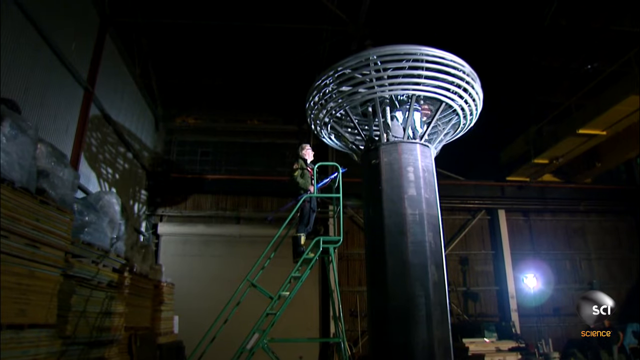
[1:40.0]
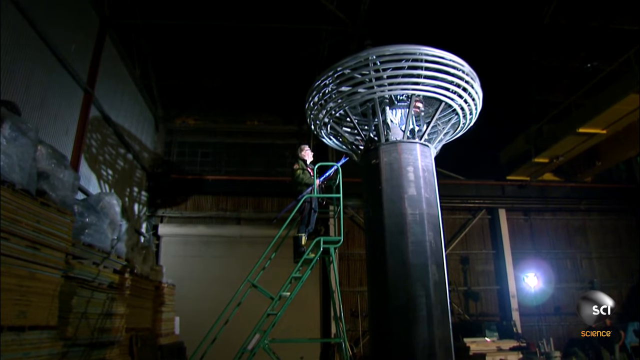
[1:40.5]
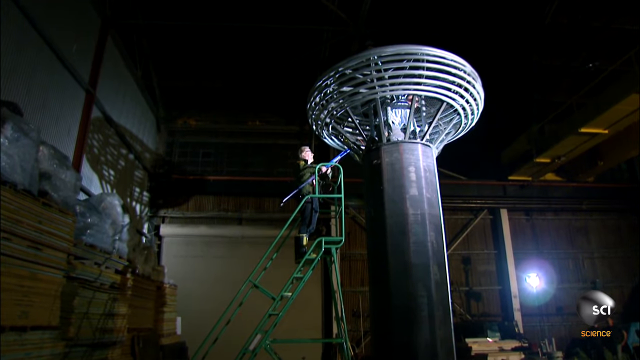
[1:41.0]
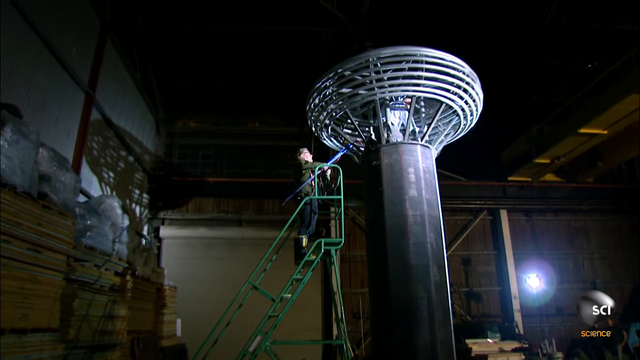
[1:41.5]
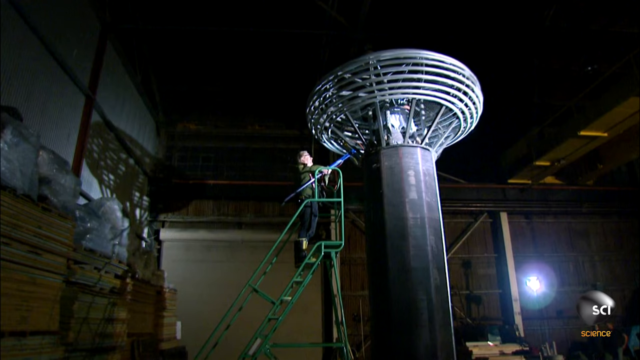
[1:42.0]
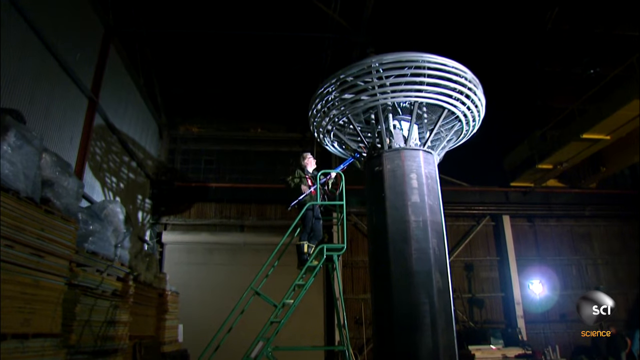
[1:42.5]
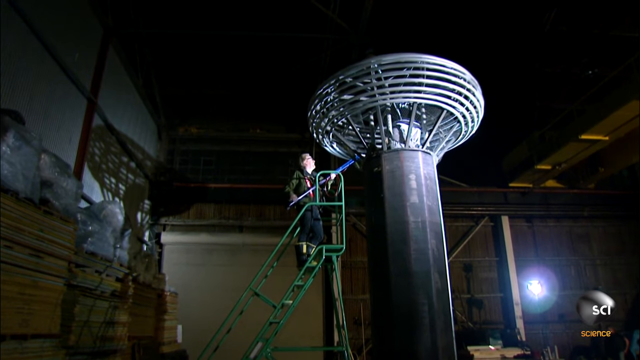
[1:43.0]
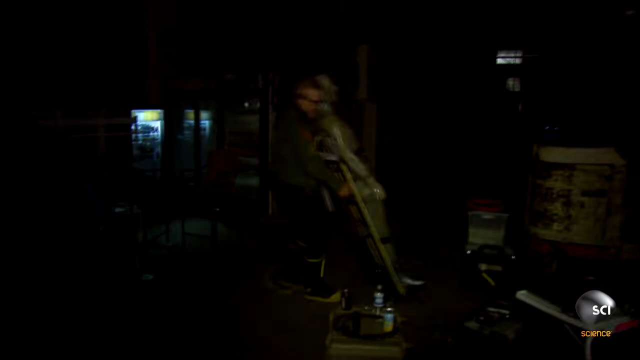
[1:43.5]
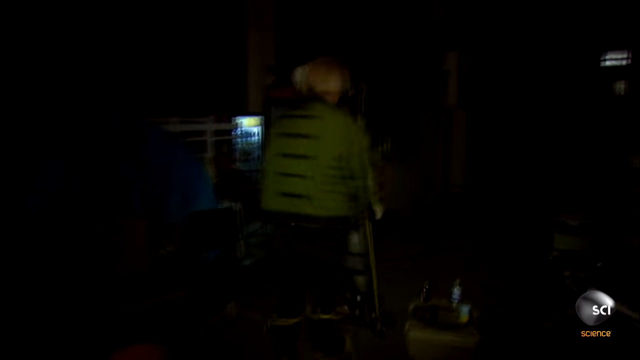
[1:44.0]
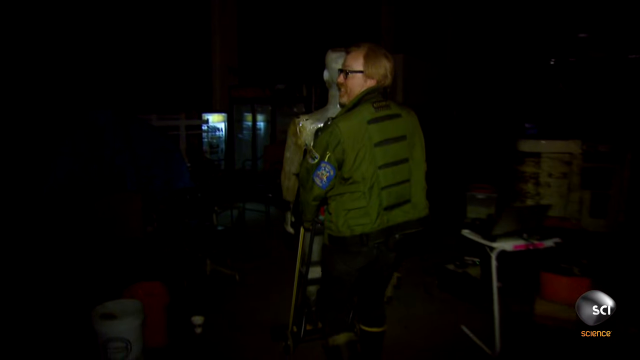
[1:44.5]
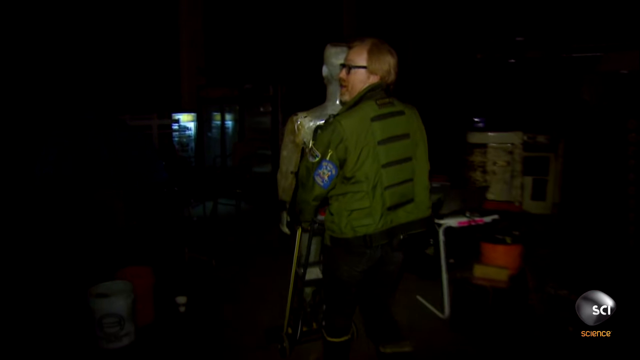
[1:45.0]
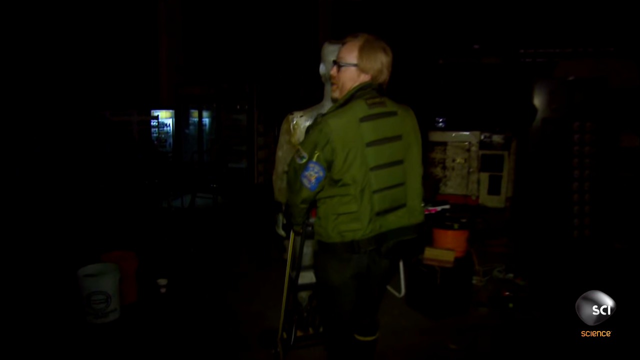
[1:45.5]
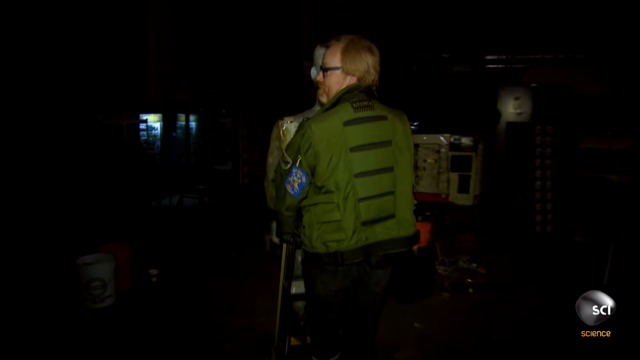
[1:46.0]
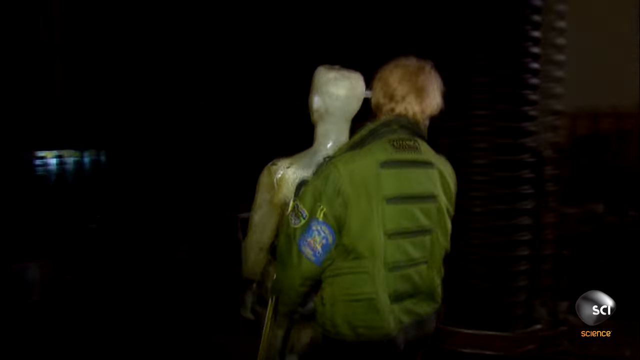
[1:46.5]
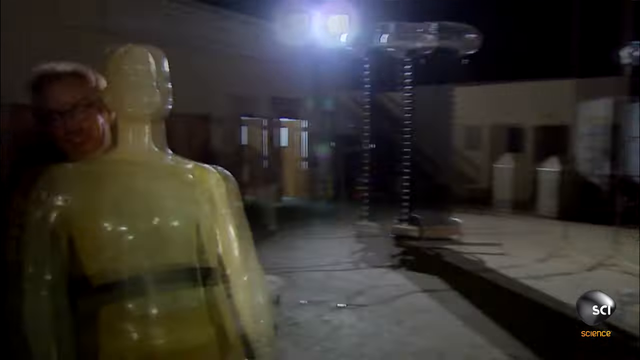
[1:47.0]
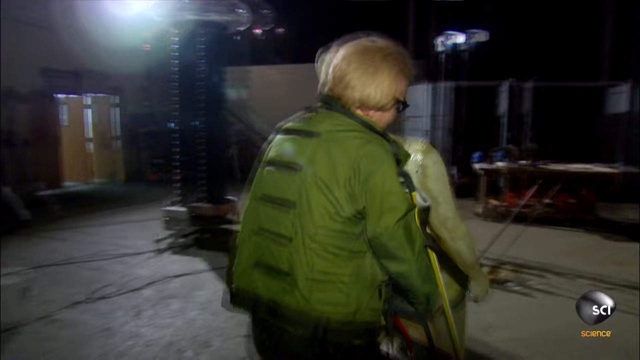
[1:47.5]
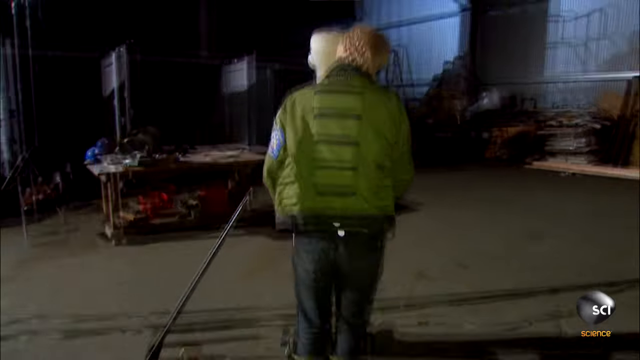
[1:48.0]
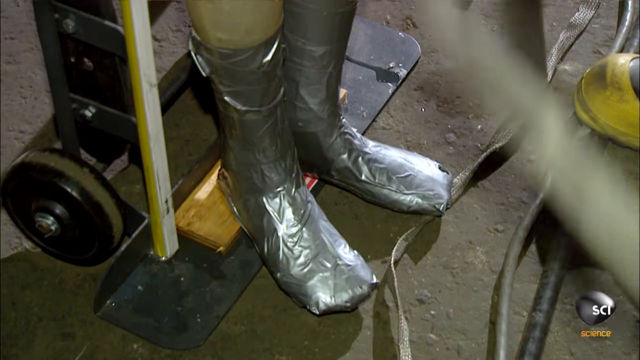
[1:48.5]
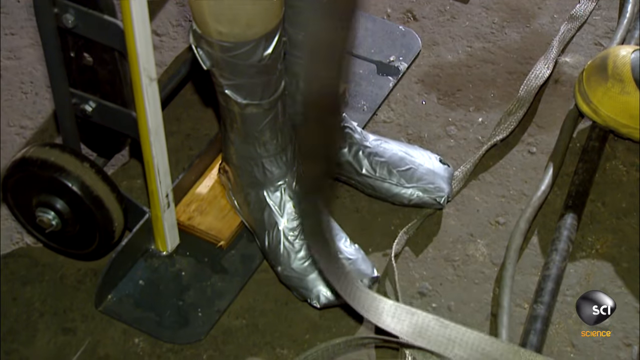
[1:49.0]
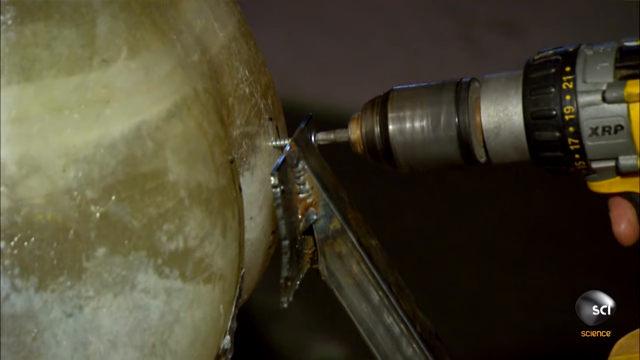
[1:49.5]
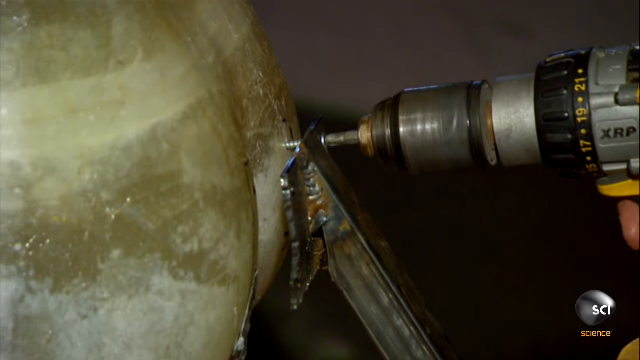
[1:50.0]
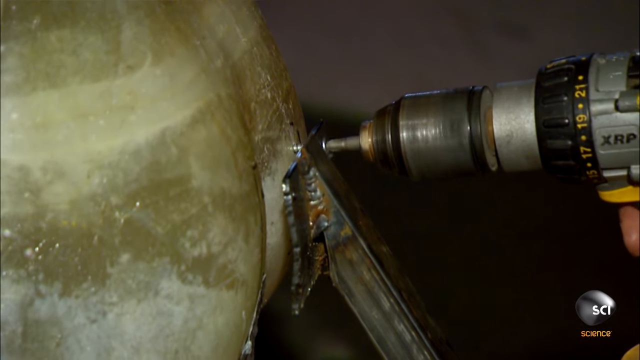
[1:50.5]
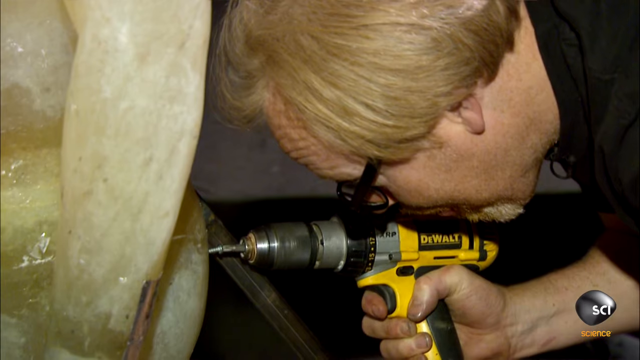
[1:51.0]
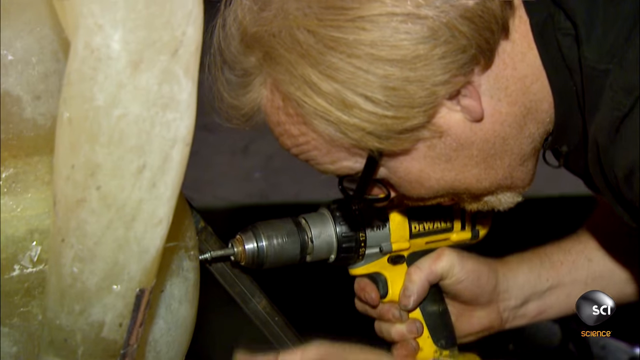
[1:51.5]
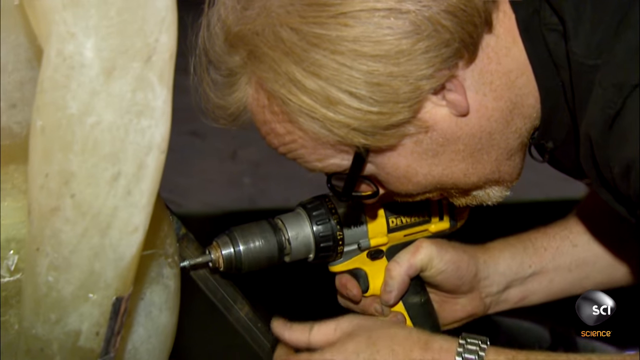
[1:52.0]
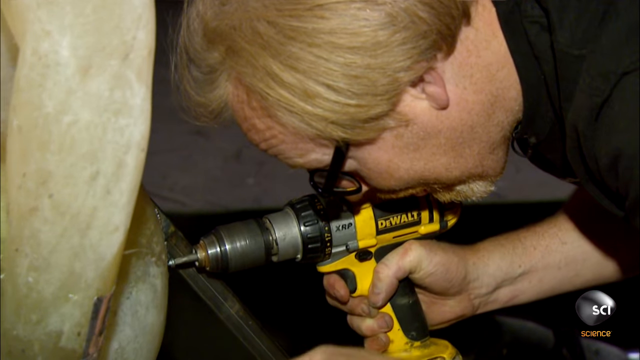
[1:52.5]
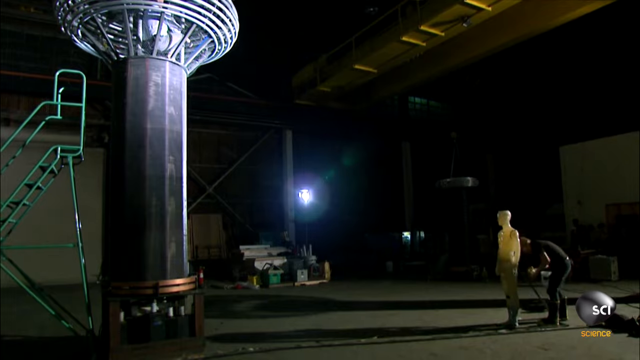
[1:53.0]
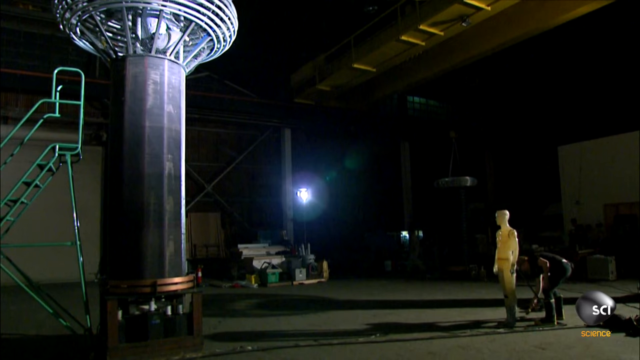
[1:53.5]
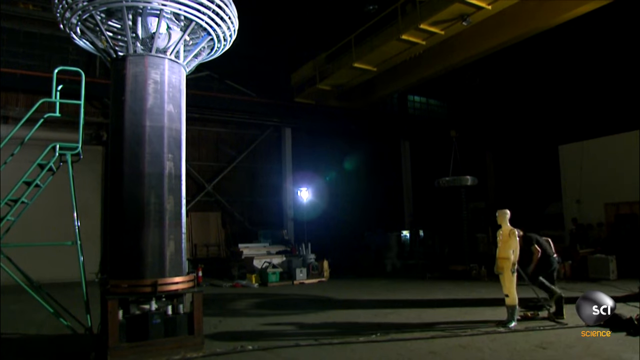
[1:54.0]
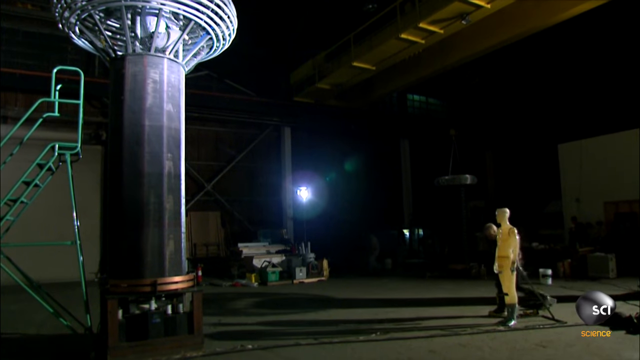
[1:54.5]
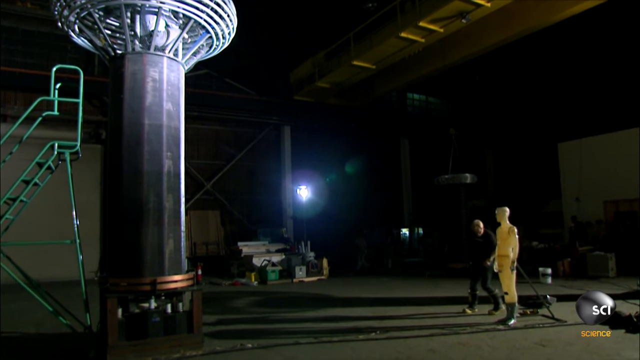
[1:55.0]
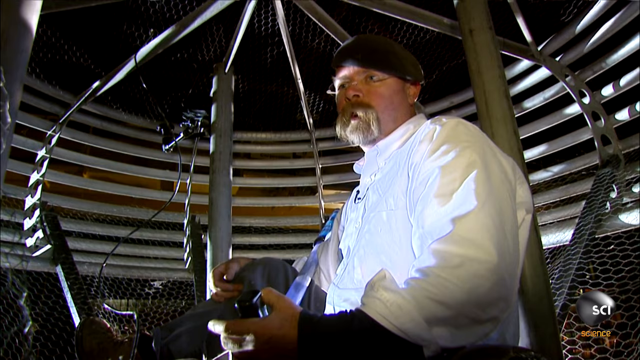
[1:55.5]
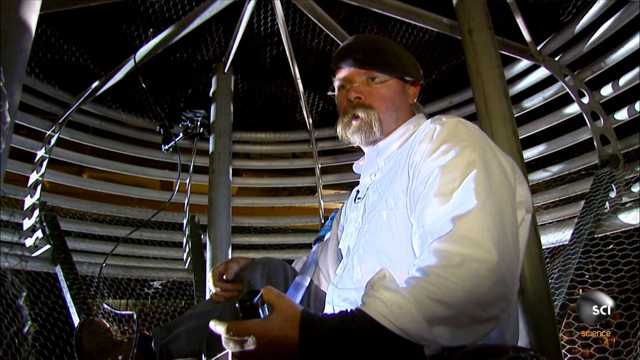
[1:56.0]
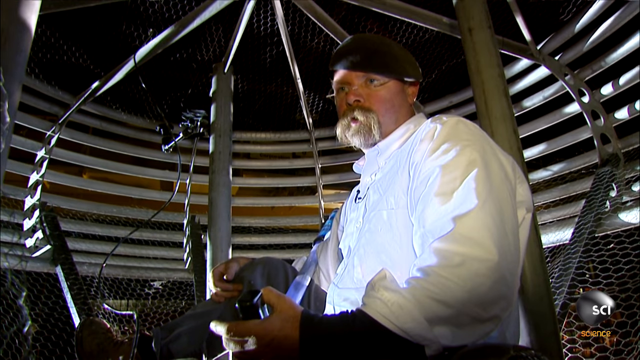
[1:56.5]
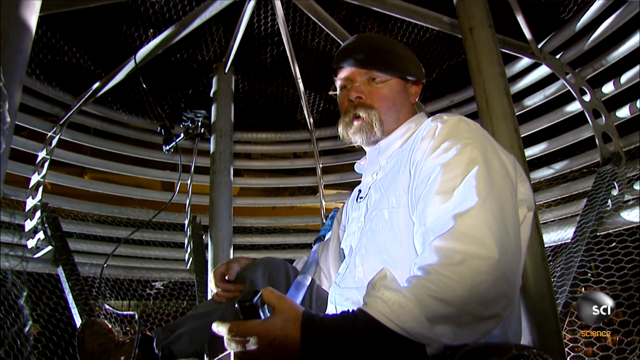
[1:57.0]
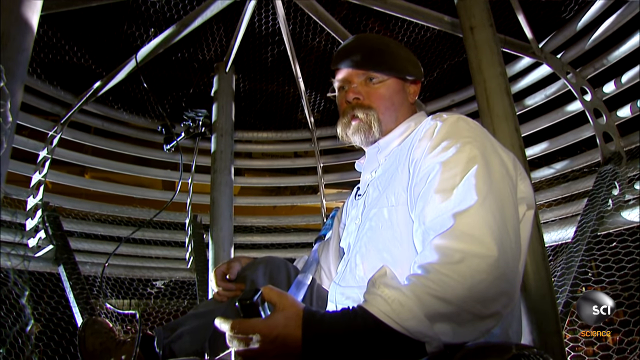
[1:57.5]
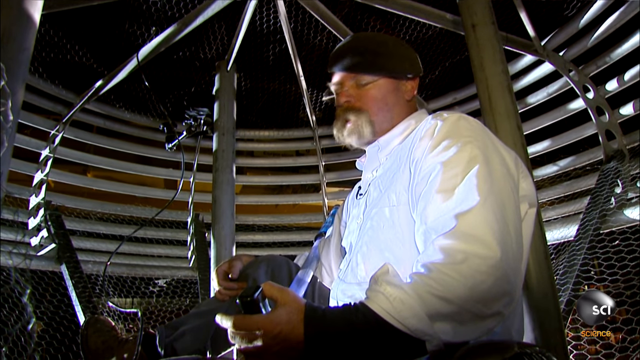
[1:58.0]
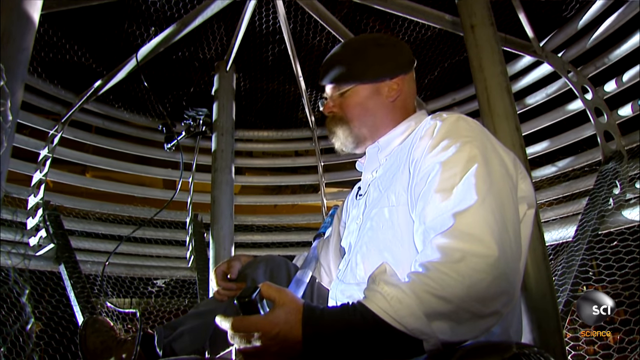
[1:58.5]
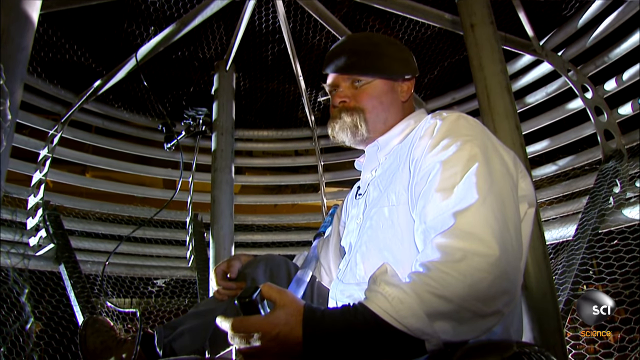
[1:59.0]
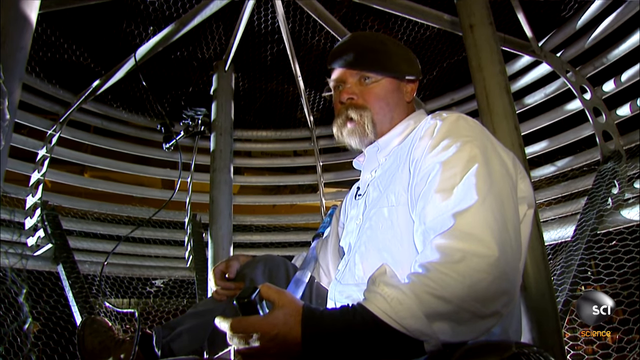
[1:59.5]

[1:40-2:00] Jamie walks up green, movable steps and looks into the Tesla coil, which he would fit inside. Somebody is already in there, and he hands the squirt gun to that person. Then he is shown pulling the mannequin on a cart. The mannequin's feet have what looks like silver duct tape on them. A metal rod is drilled in so the mannequin can stand up on its own and be stable. Then the man in white, apparently Jamie, sits inside the Tesla coil, talking, probably about the experiment.